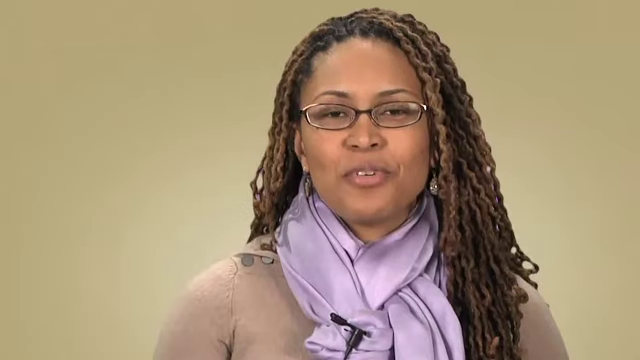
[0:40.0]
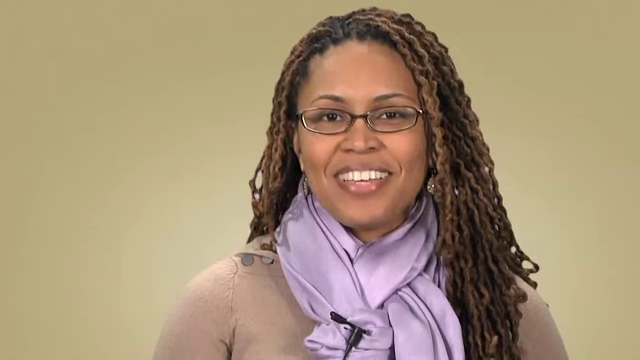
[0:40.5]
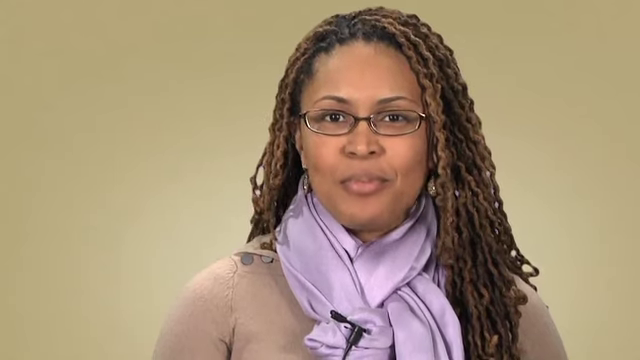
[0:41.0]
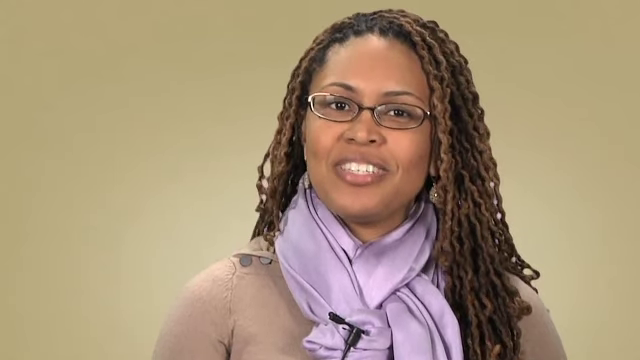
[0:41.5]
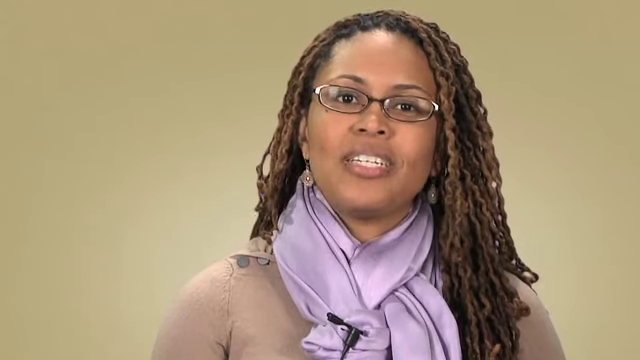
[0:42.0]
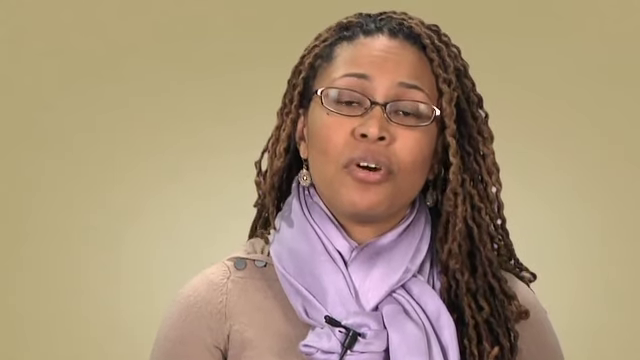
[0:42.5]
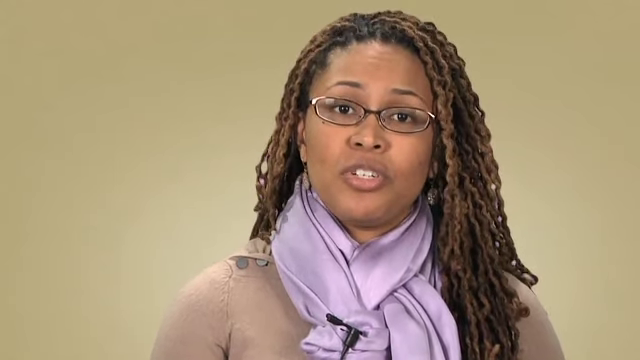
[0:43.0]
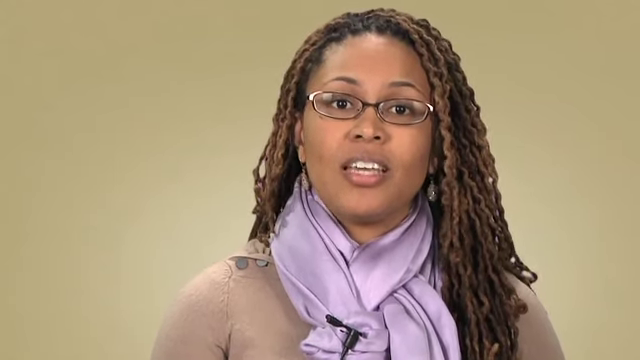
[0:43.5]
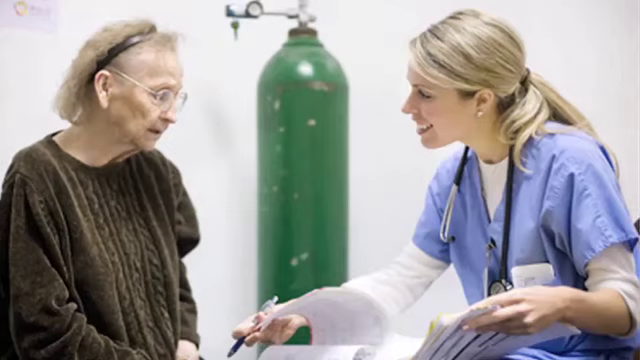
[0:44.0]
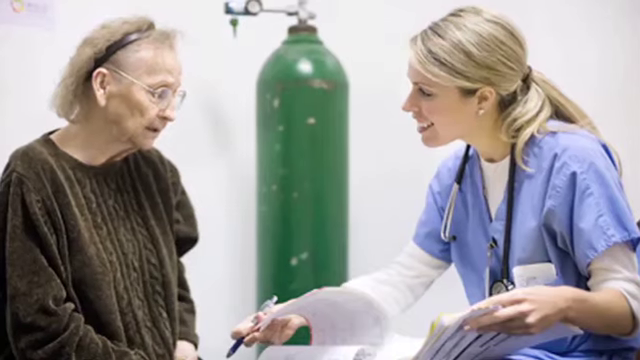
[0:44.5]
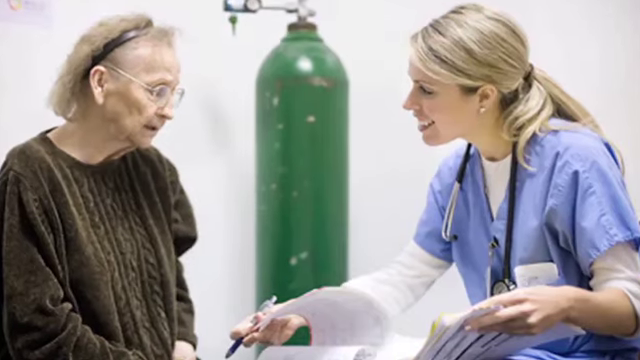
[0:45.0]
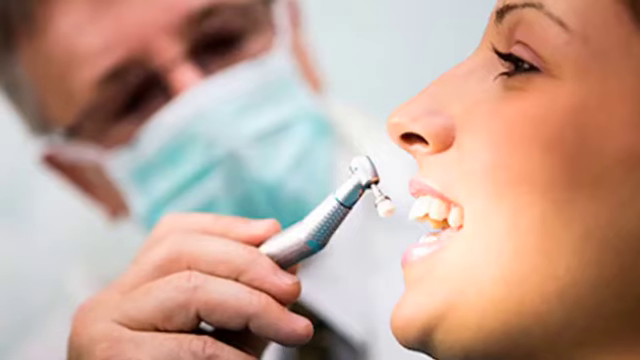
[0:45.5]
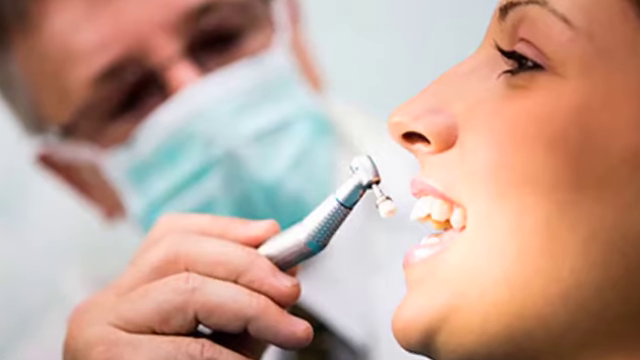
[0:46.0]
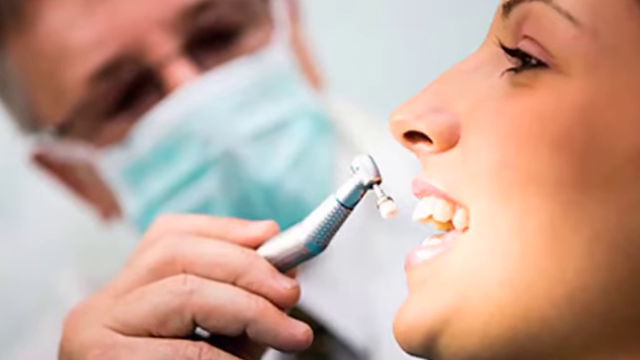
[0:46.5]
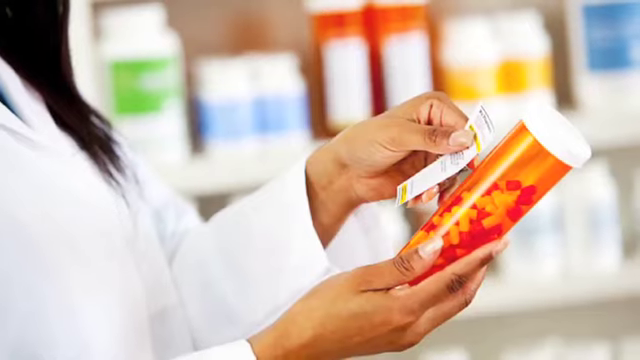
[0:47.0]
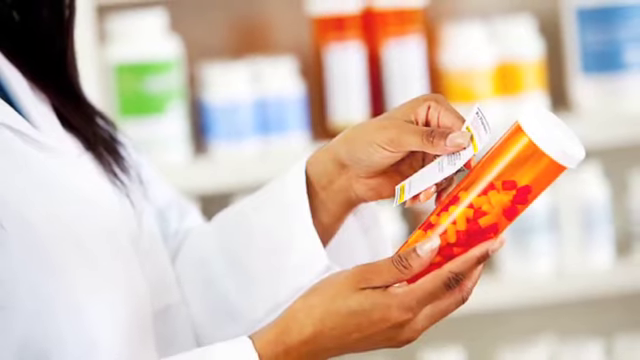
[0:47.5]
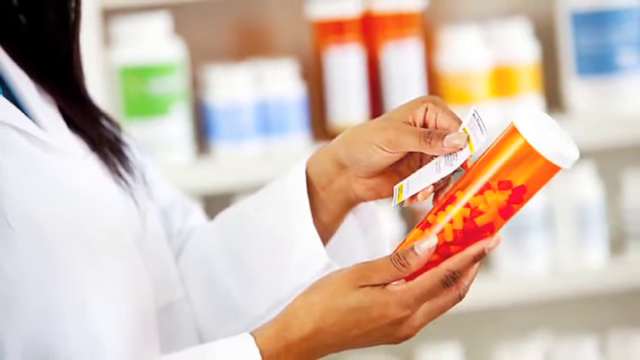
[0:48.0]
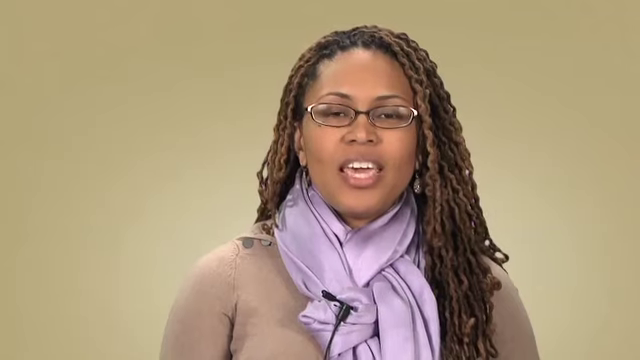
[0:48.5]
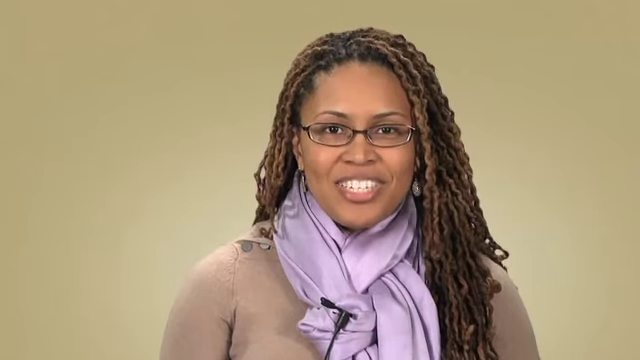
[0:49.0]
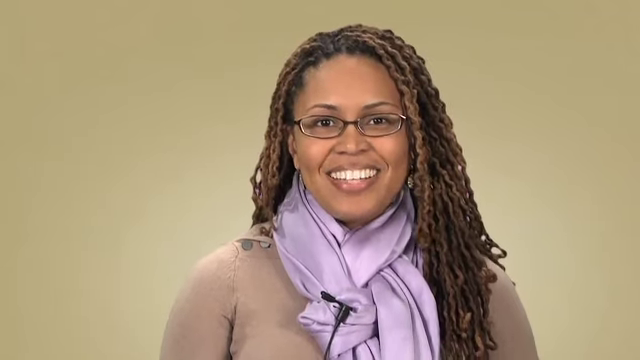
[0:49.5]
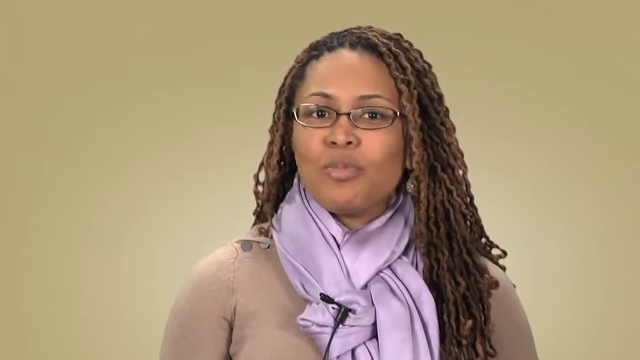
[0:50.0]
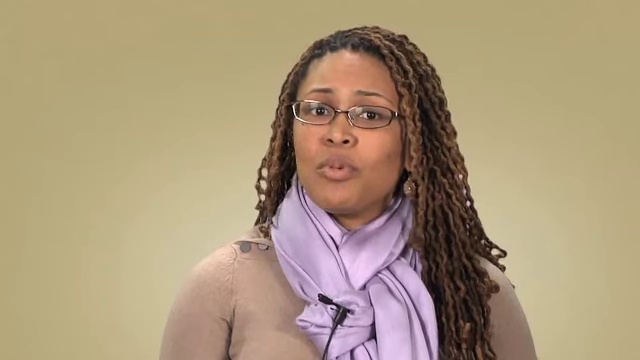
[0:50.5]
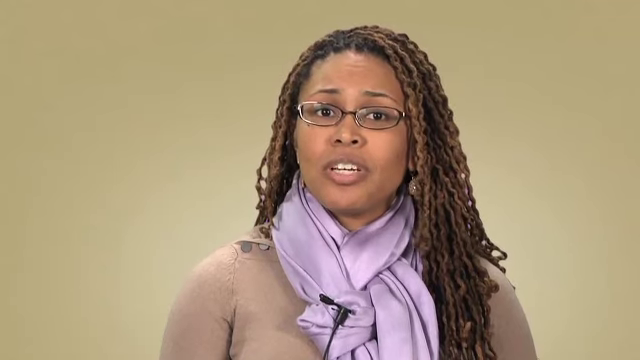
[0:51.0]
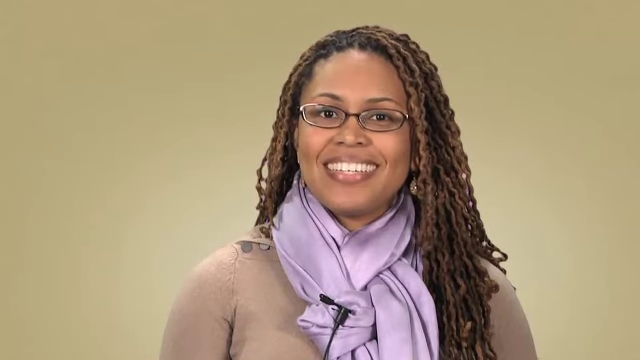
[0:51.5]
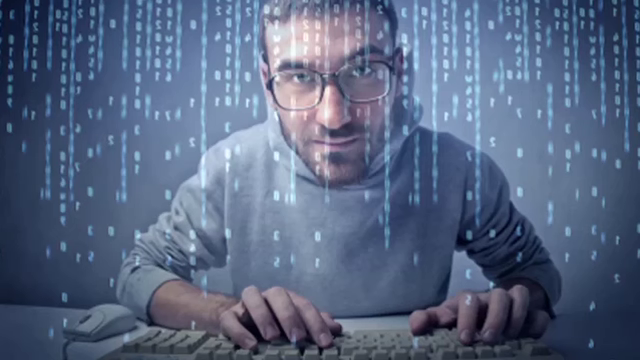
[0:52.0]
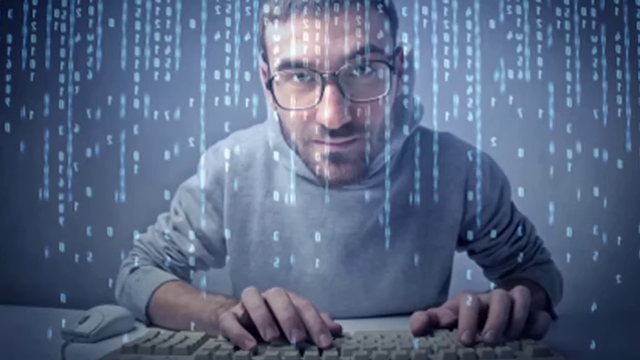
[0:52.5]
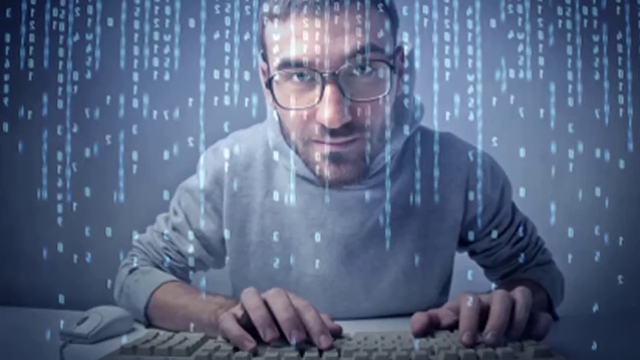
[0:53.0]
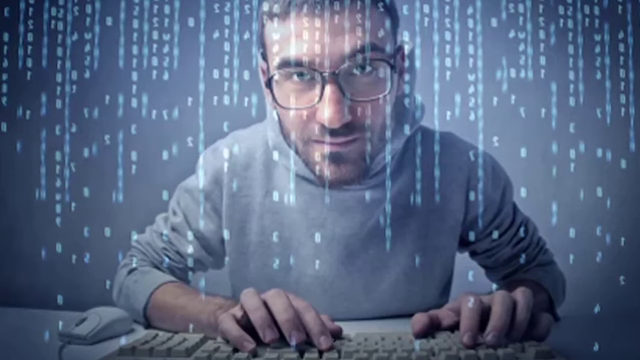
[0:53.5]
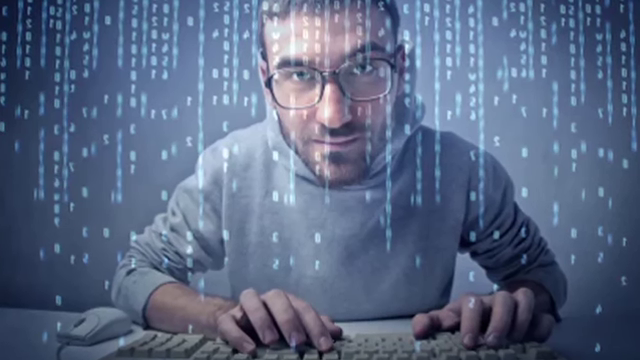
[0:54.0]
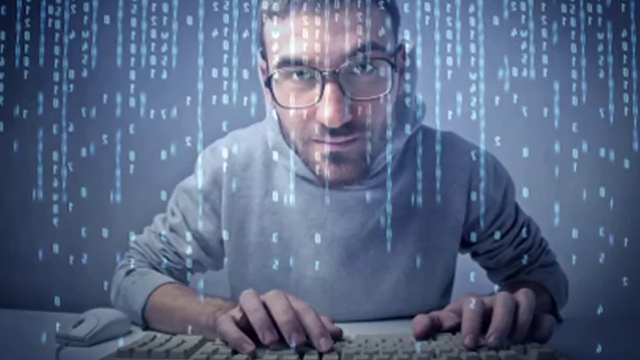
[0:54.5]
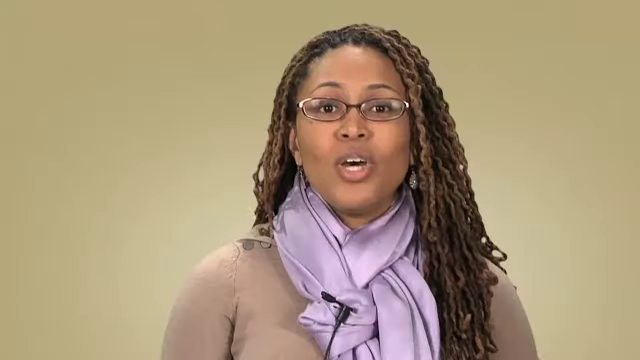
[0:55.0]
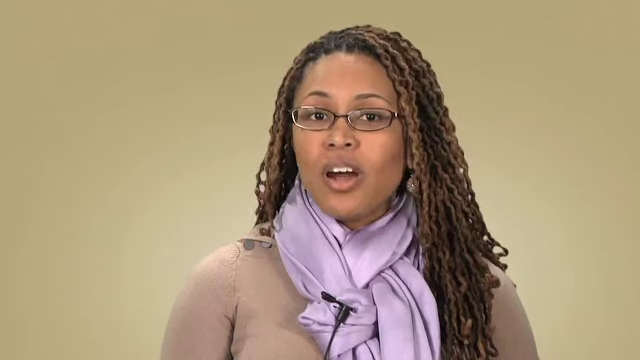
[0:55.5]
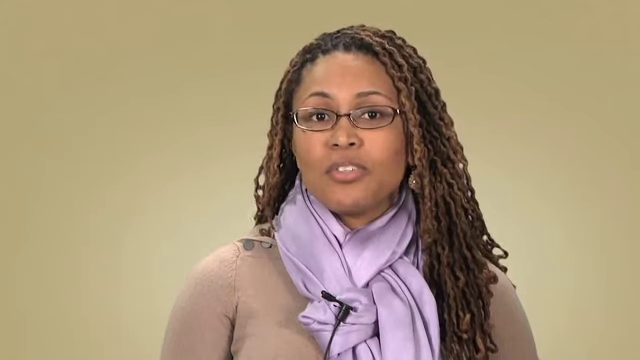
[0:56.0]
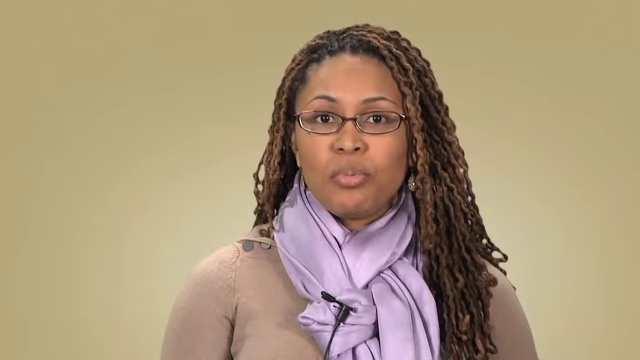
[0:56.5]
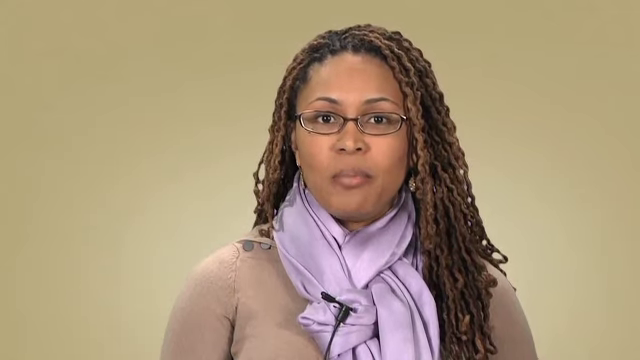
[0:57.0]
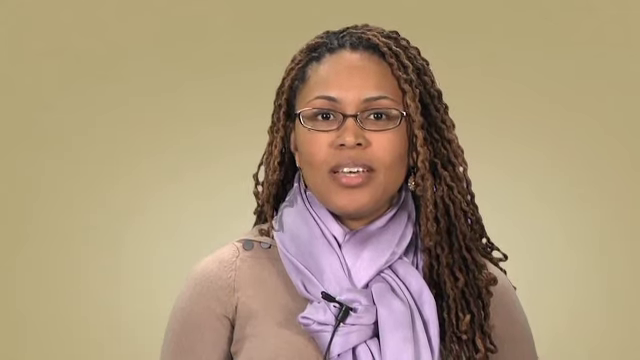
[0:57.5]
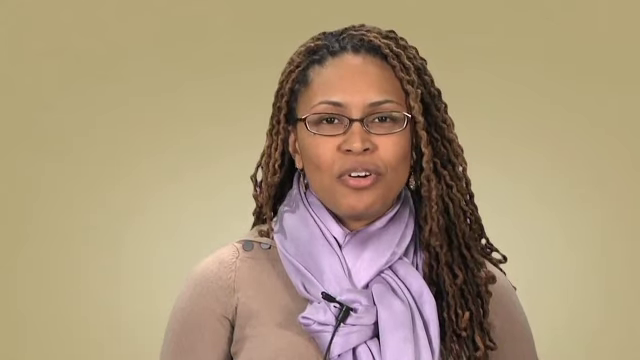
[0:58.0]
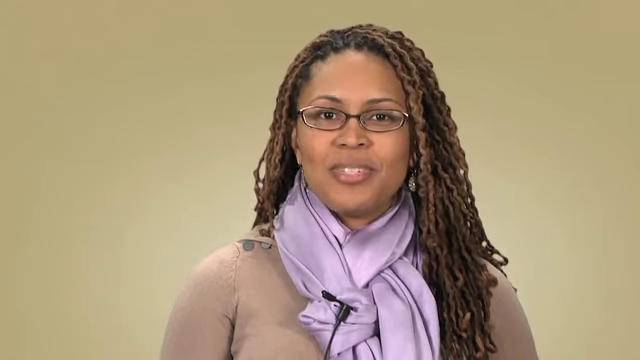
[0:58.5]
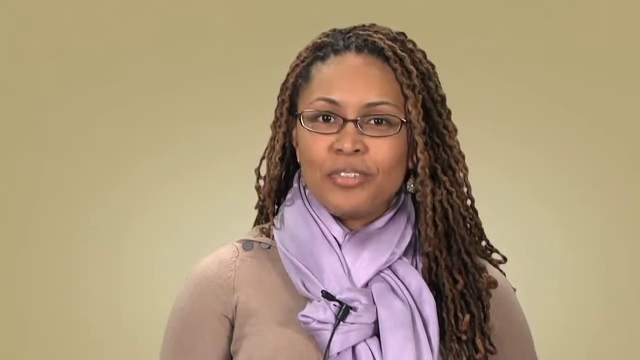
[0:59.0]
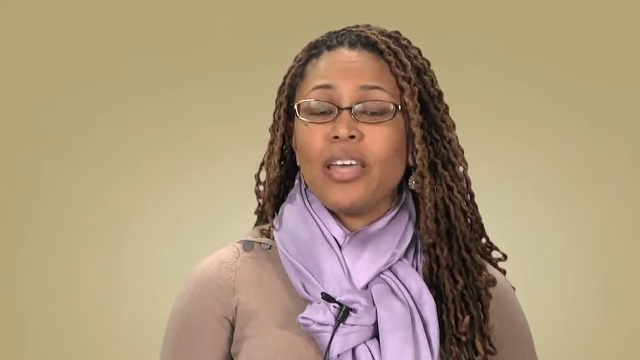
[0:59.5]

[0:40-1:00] The African-American woman who has been talking appears again. She wears glasses, a purple scarf around her neck that looks like it is tied in three different ways, and a brown sweater, and her hair is braided down past her shoulders. An image follows of what looks like a nurse with a stethoscope around her neck talking to an elderly woman, probably in her 80s or 90s, who wears glasses and a brown sweater. Next, a dentist works on someone's teeth, possibly cleaning them, holding an instrument as they are about to clean the person's teeth. Then an African-American woman holds up a big bottle of pills and looks at the label on it.